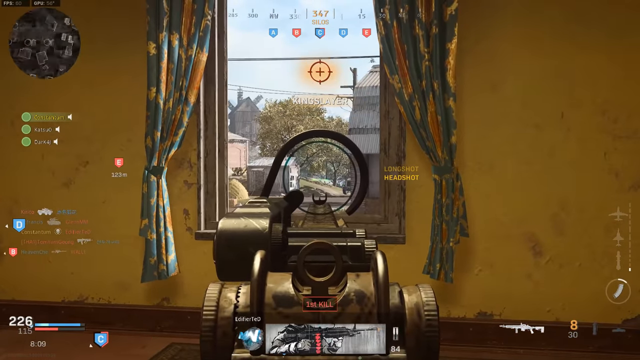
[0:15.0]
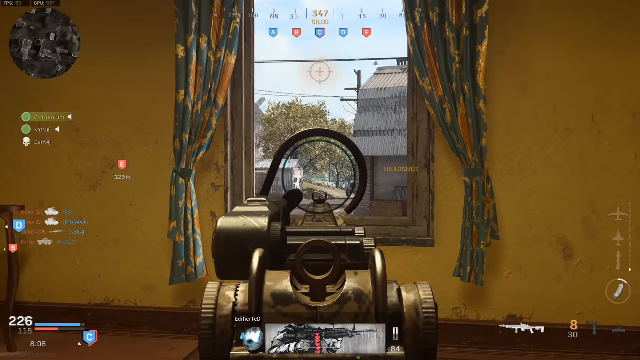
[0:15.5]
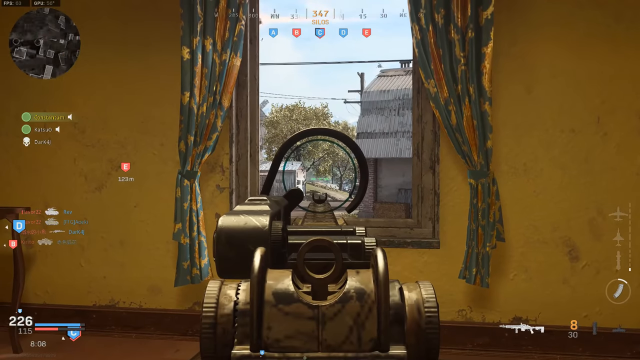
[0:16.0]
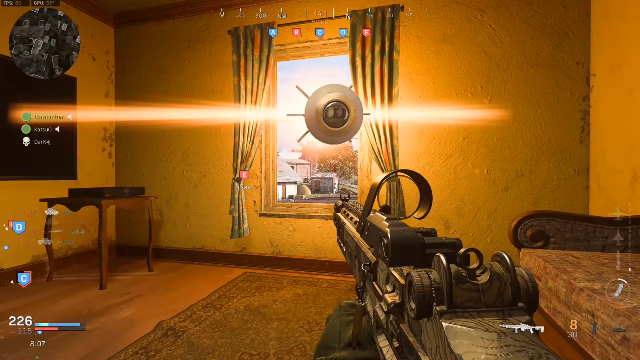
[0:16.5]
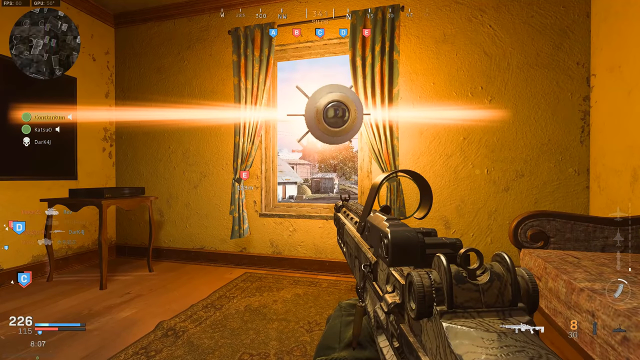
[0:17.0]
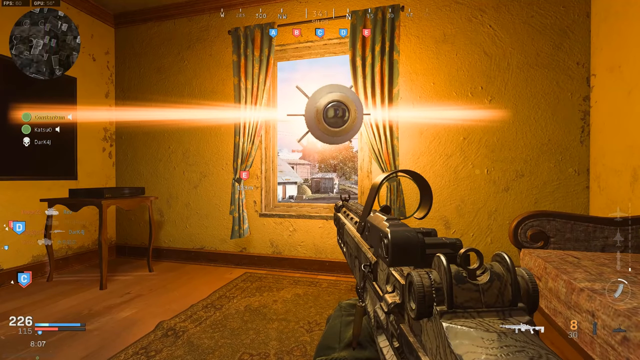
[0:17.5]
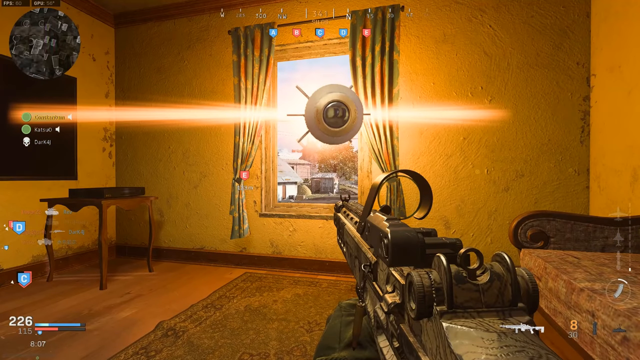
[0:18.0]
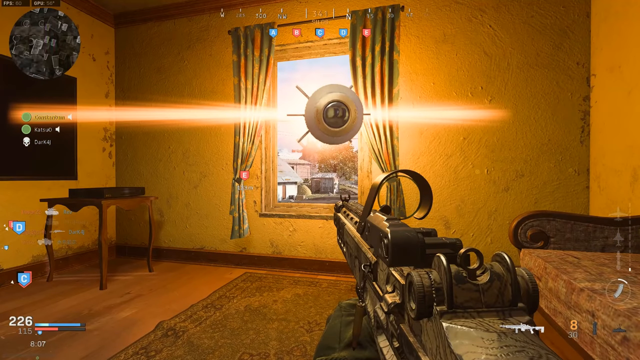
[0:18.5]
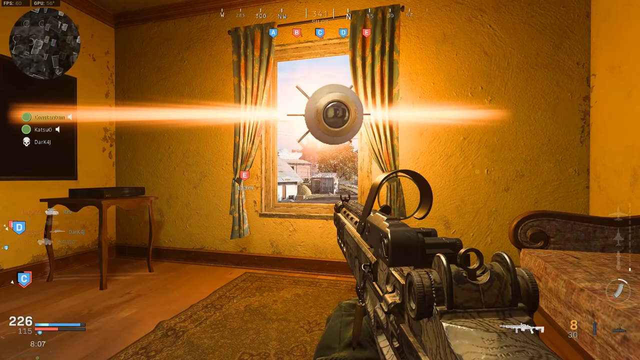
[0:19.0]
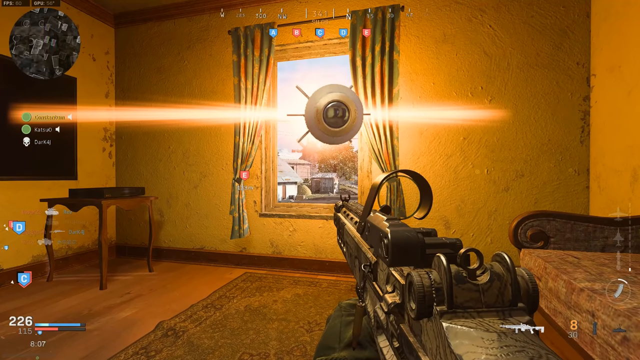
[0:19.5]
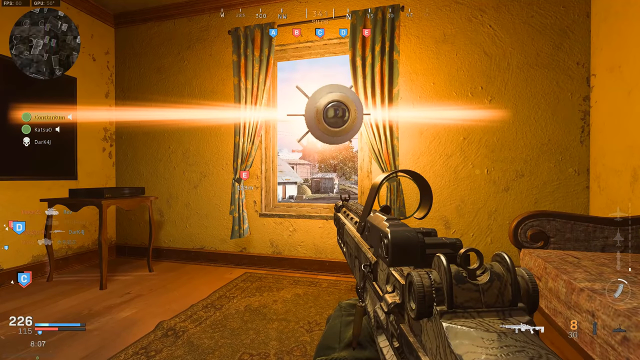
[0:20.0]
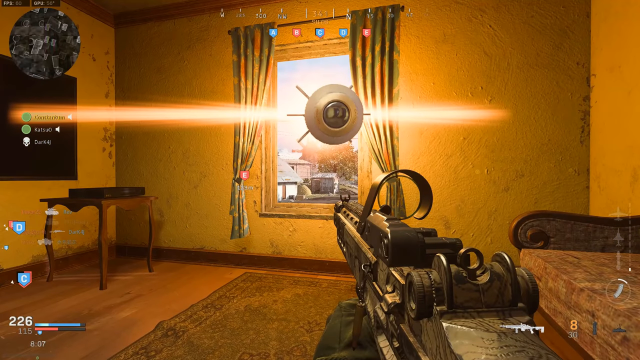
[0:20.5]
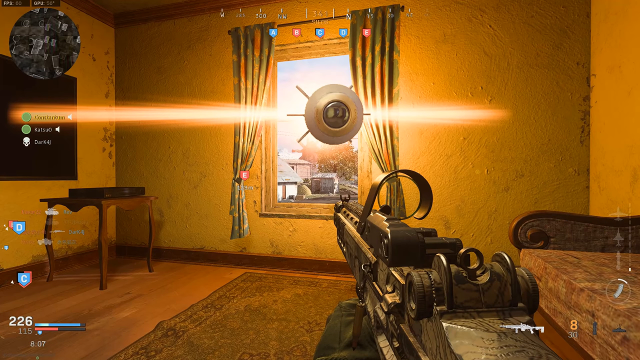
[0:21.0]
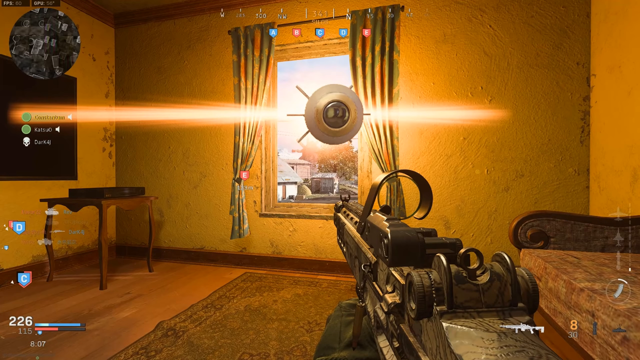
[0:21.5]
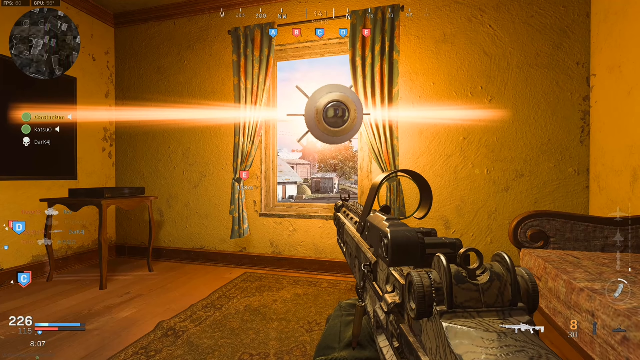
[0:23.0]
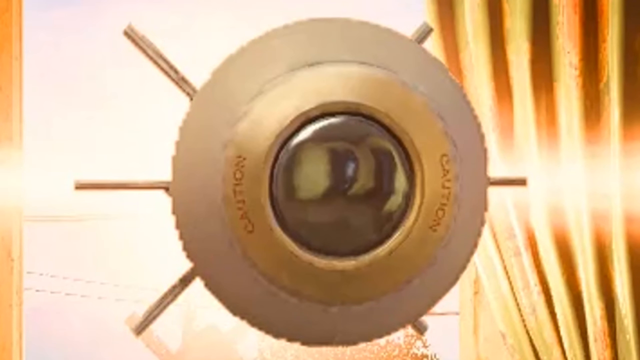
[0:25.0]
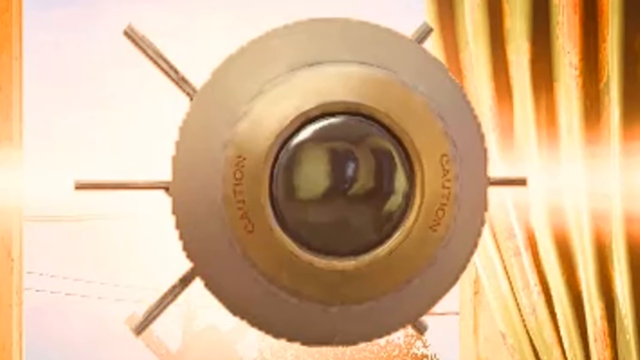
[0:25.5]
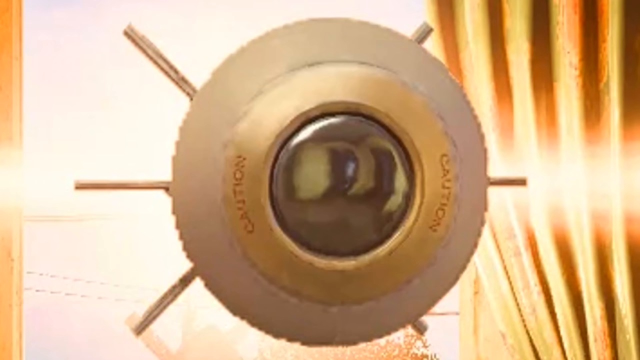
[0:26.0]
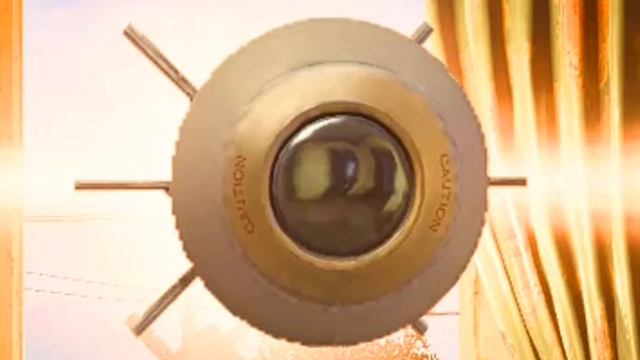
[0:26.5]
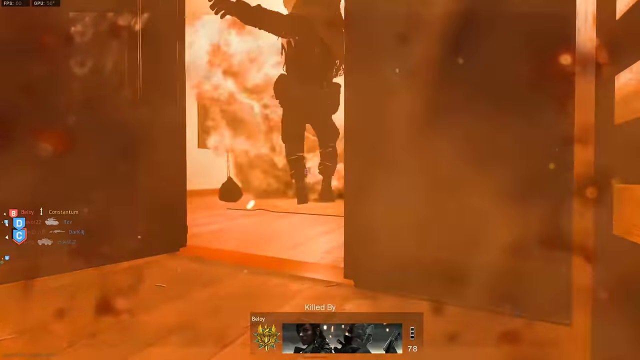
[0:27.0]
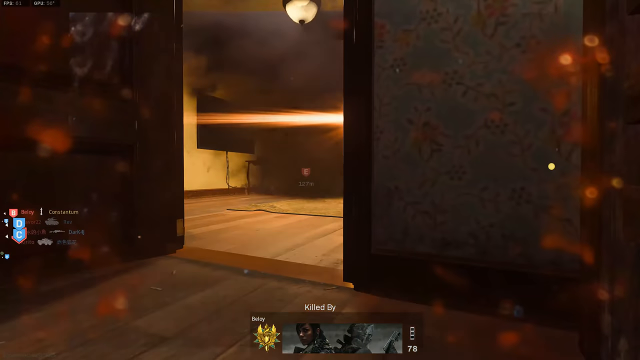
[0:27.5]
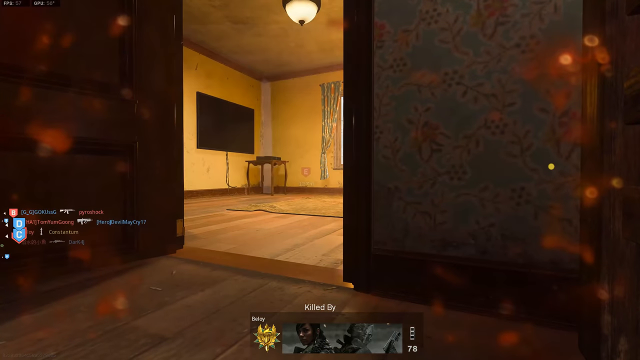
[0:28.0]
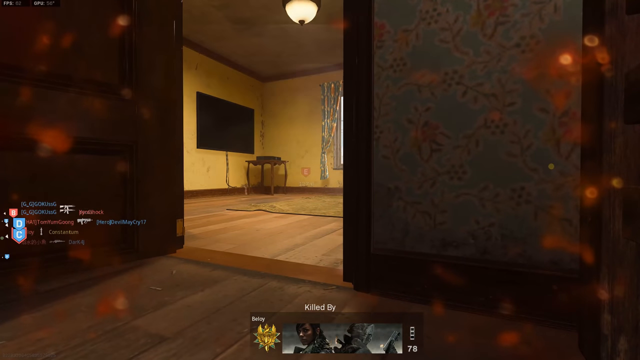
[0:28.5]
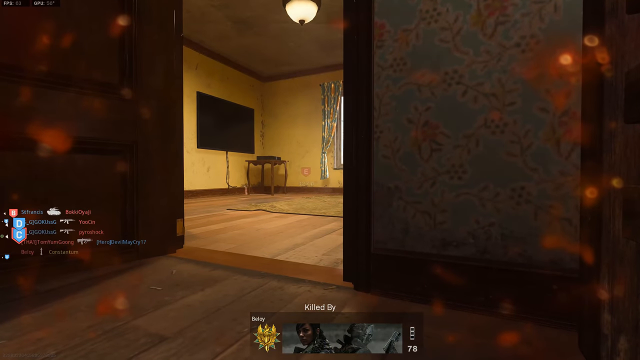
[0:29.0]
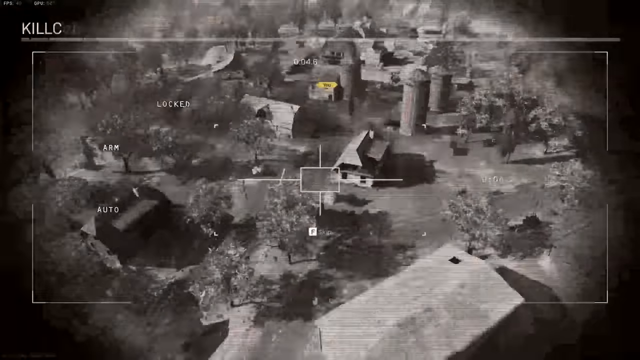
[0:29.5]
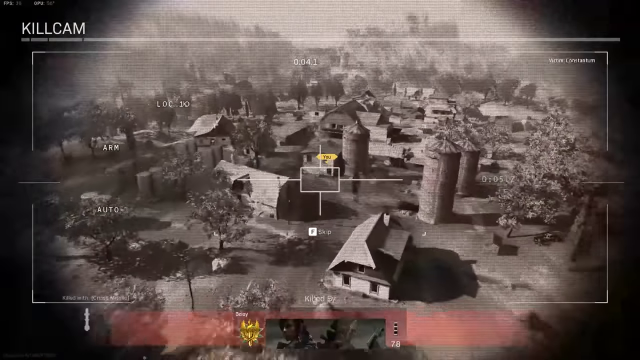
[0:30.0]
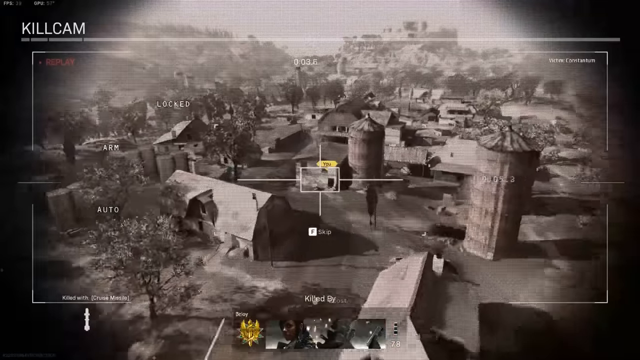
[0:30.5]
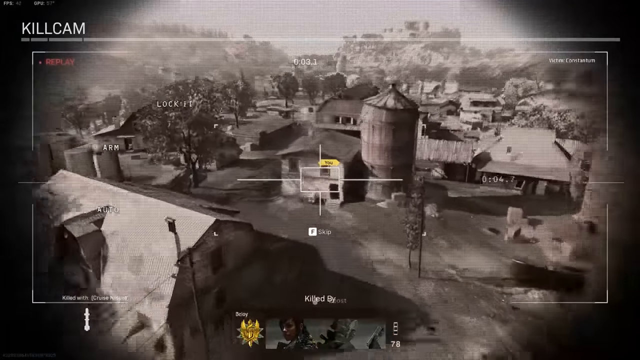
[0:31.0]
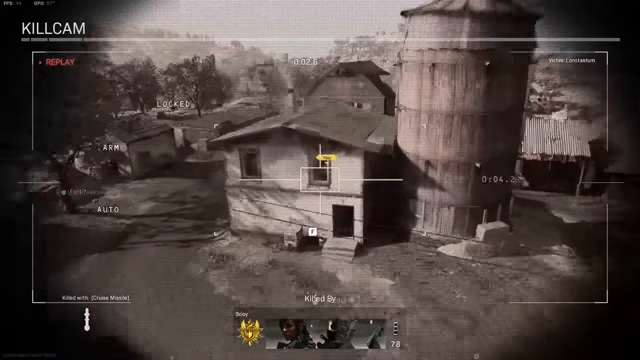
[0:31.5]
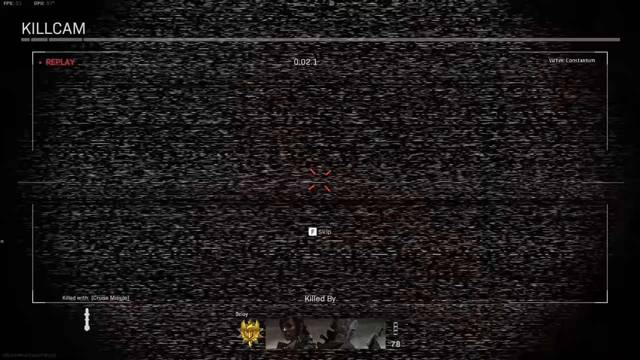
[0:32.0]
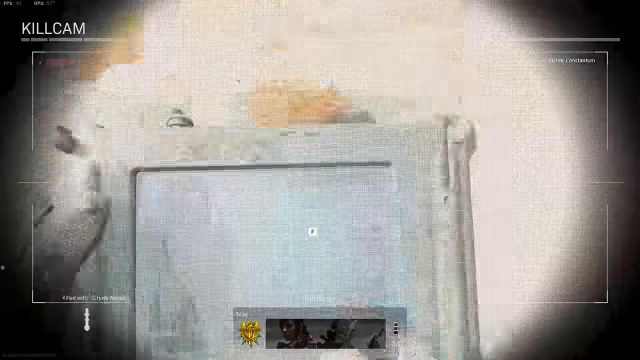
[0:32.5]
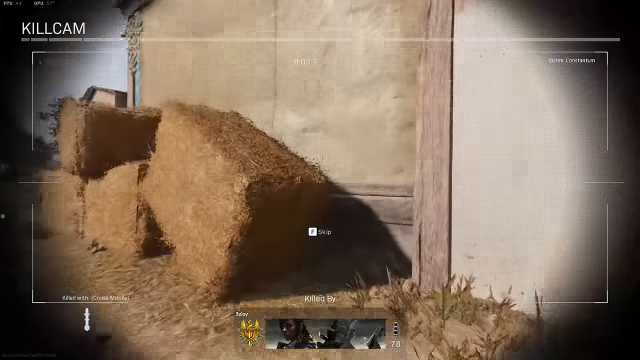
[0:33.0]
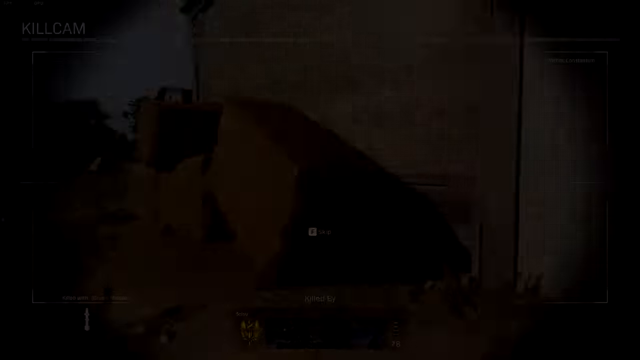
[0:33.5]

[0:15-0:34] The view continues looking out the window where the first kill headshot took place. After a second or two, some sort of projectile device flies through the window toward the viewer; the window is just a frame with no actual window in it. The image pauses for several seconds on the projectile, which has entered the room, is right in front of the viewer, and is lighting up the room a bit. After a few more seconds, the view zooms in very closely on the projectile, which has the word "CAUTION" written in small letters on the left and right side of its front. It stays frozen on that for a couple of seconds as well, apparently emphasizing it as possibly an enemy missile. After the freeze frame, an explosion occurs in the room and the character goes flying backwards out of the room through the open door. The video then transitions to something called Kill Cam, showing a replay of what just happened from the perspective of the missile as it flies into the room and explodes, killing the character.